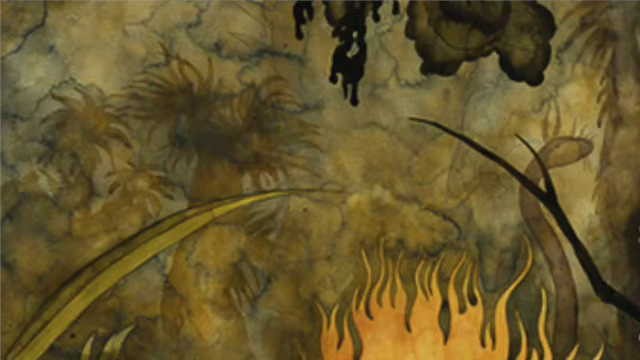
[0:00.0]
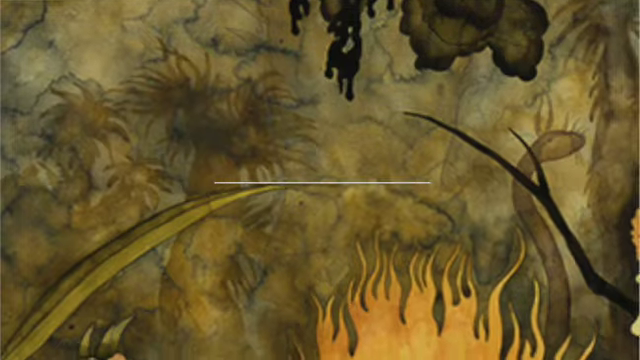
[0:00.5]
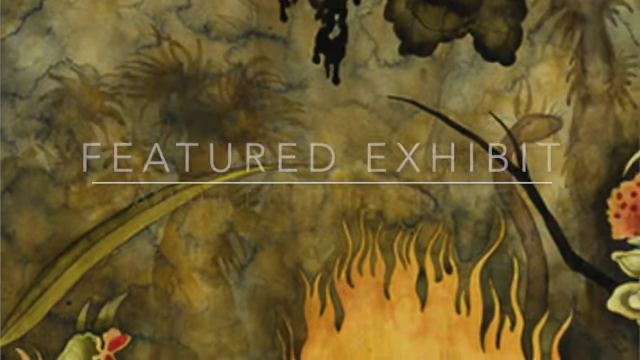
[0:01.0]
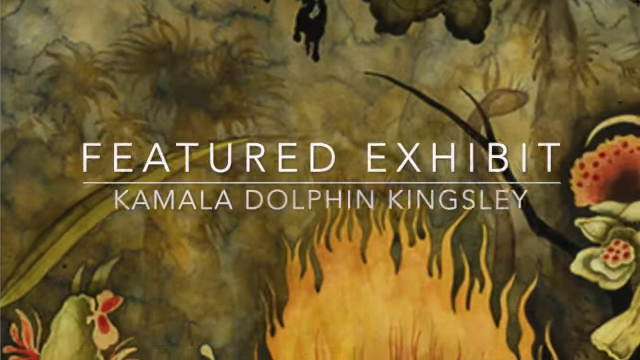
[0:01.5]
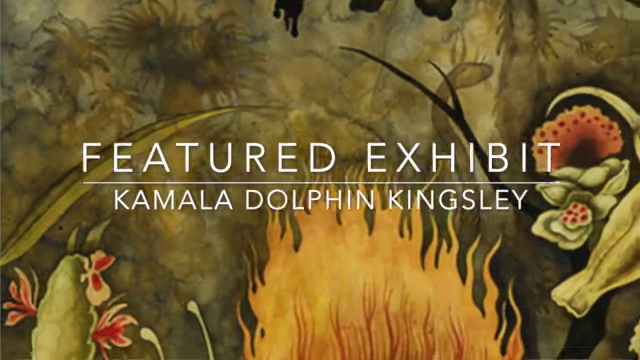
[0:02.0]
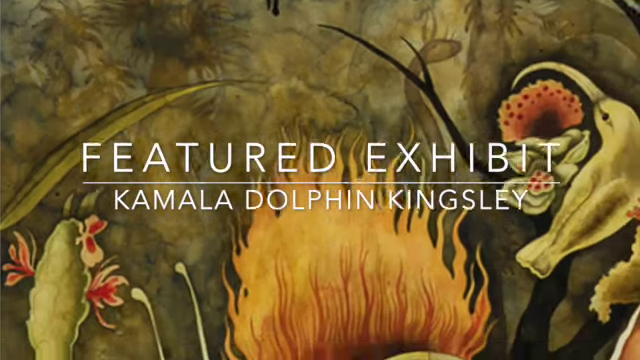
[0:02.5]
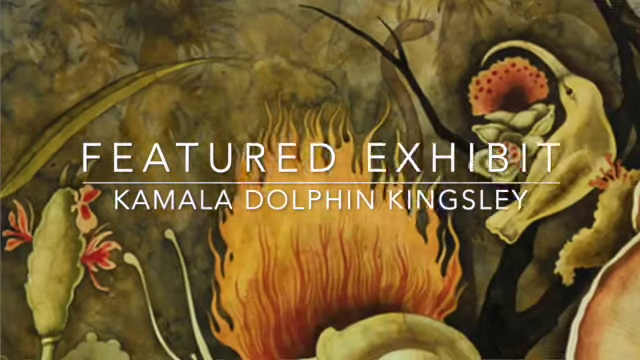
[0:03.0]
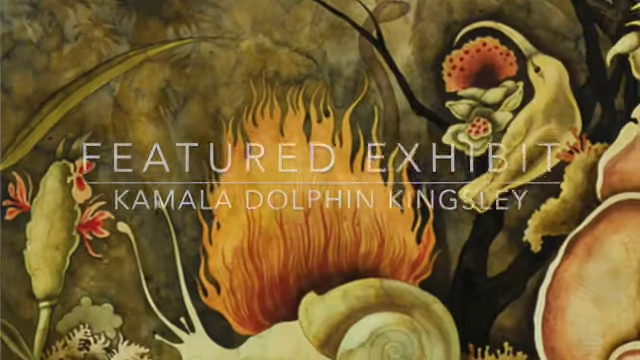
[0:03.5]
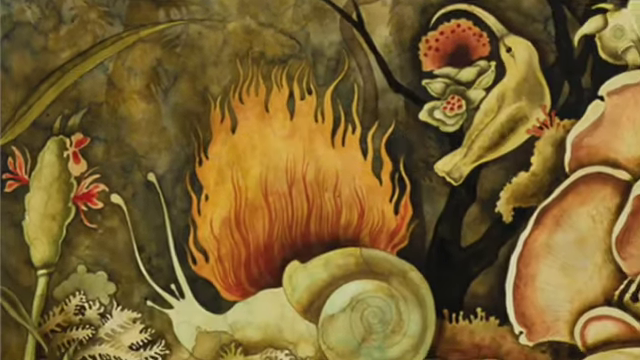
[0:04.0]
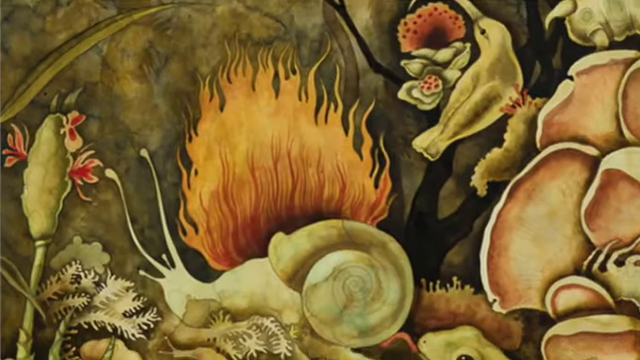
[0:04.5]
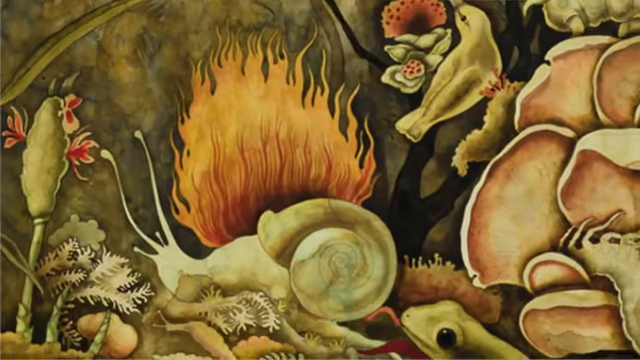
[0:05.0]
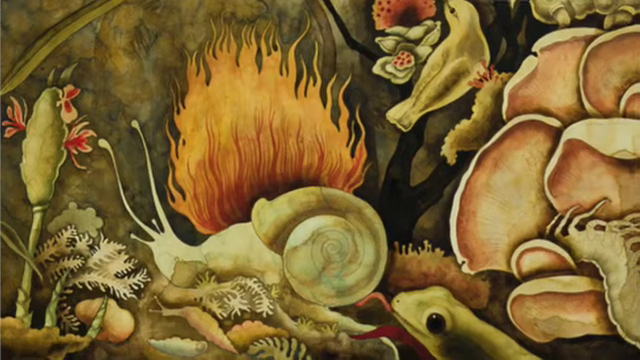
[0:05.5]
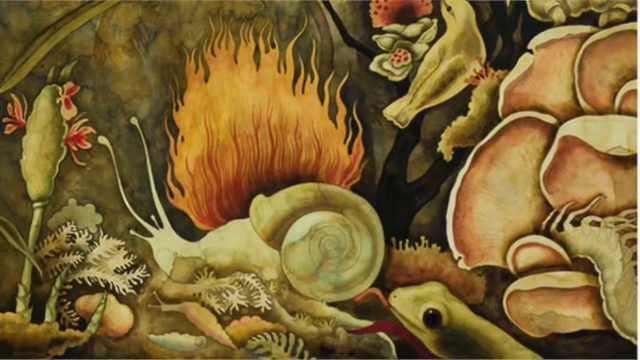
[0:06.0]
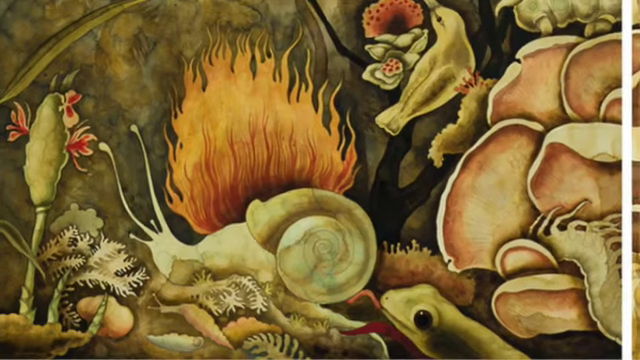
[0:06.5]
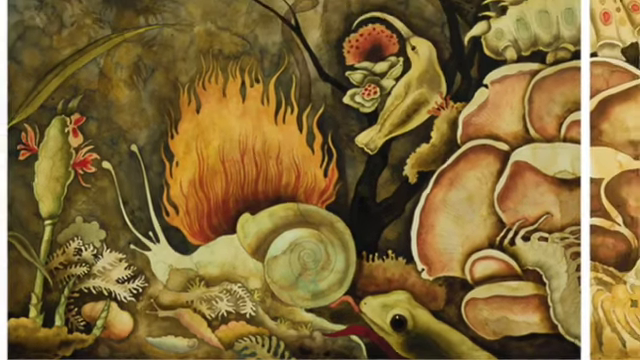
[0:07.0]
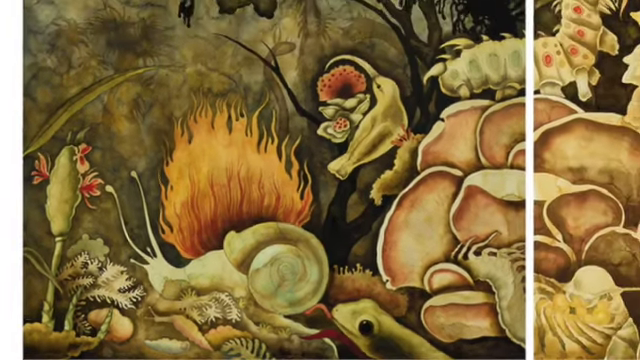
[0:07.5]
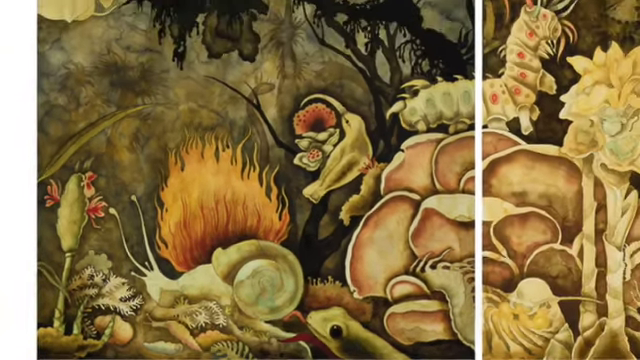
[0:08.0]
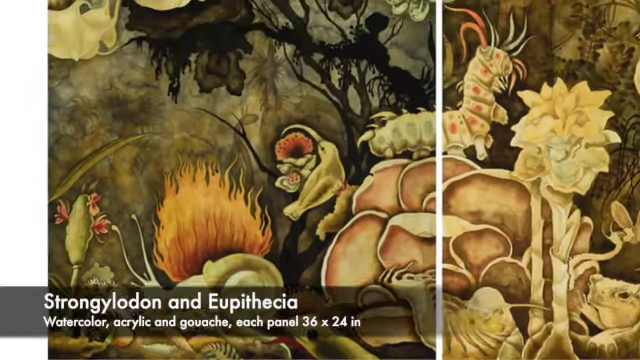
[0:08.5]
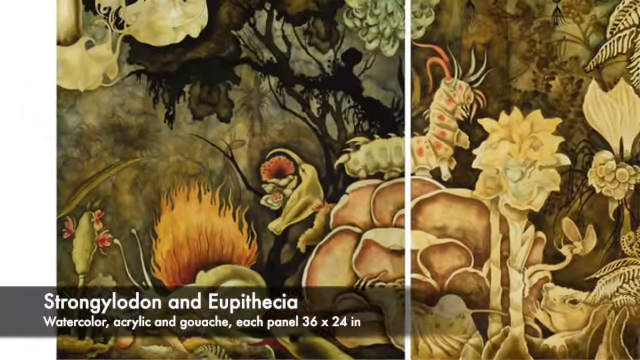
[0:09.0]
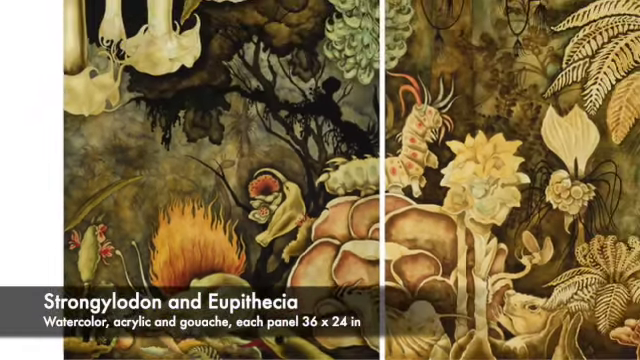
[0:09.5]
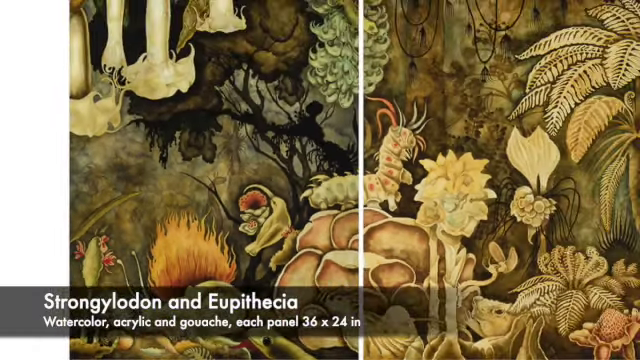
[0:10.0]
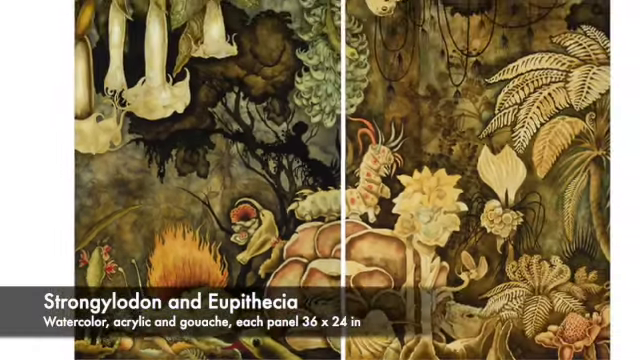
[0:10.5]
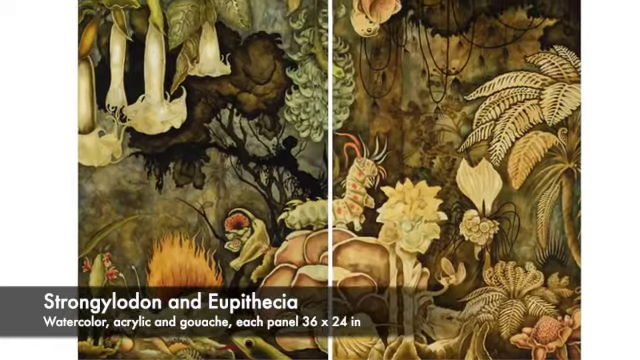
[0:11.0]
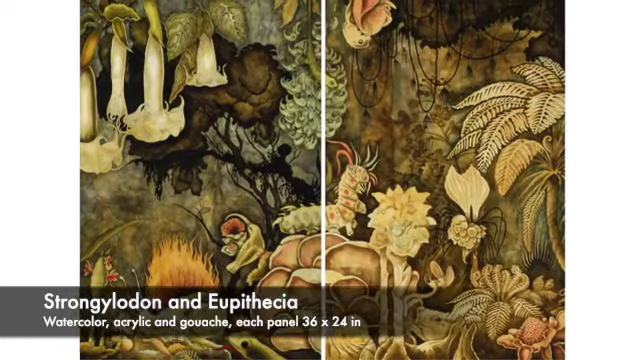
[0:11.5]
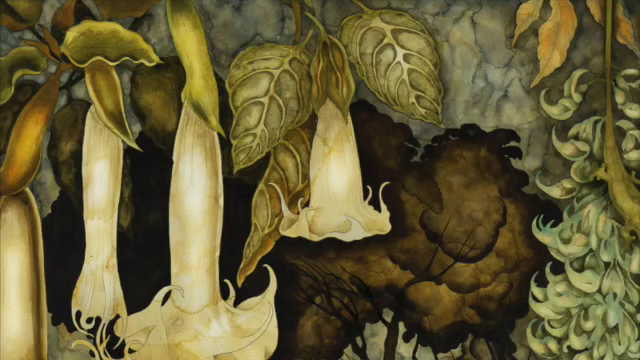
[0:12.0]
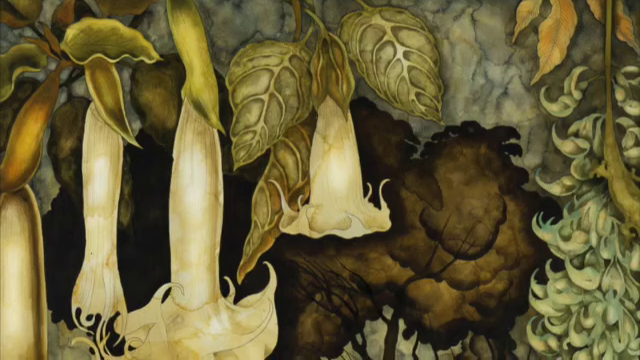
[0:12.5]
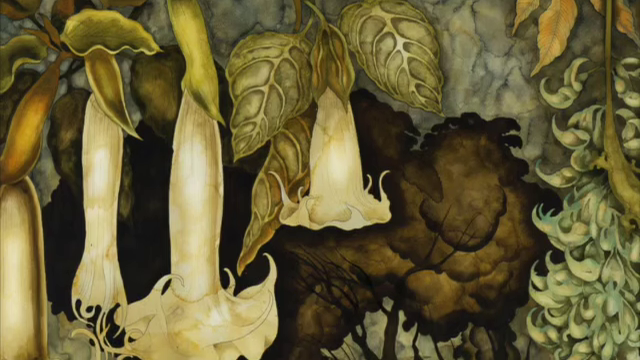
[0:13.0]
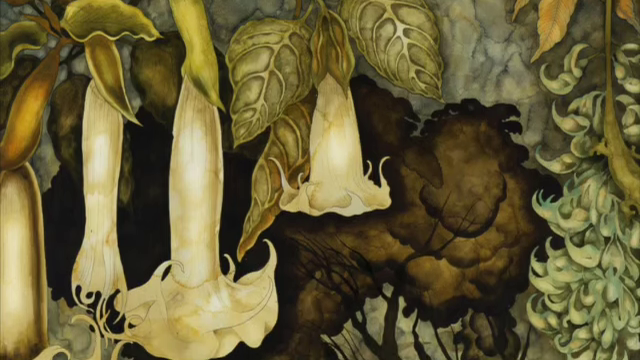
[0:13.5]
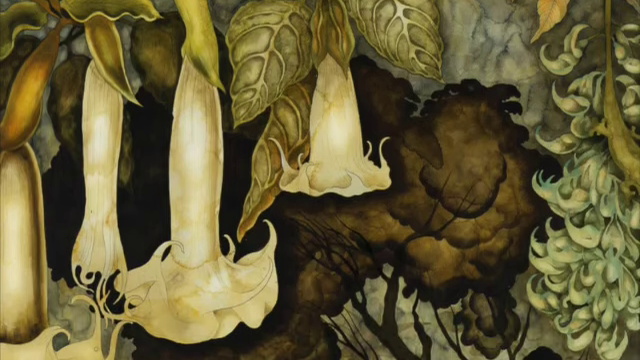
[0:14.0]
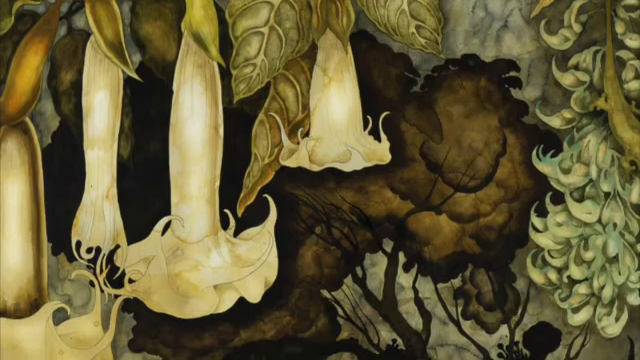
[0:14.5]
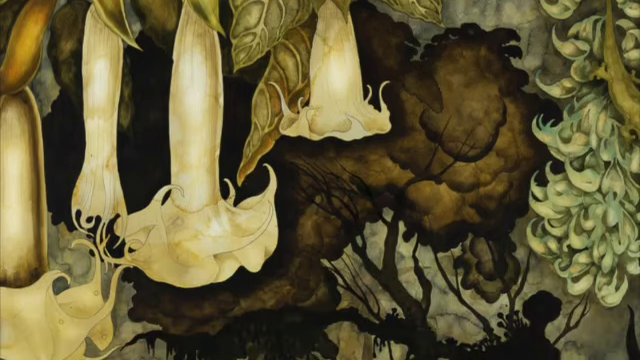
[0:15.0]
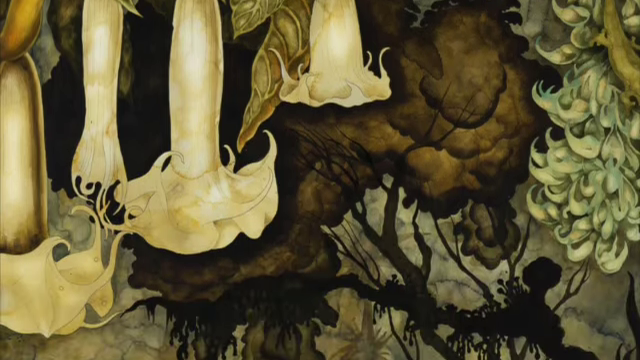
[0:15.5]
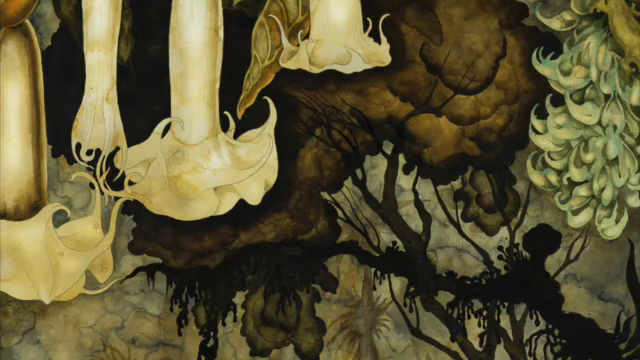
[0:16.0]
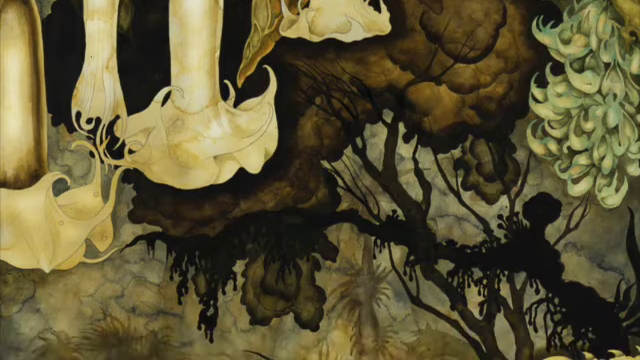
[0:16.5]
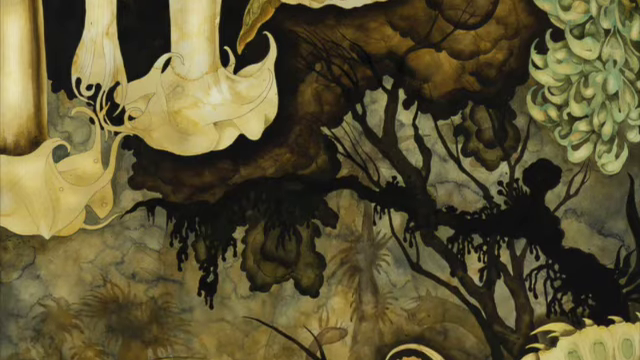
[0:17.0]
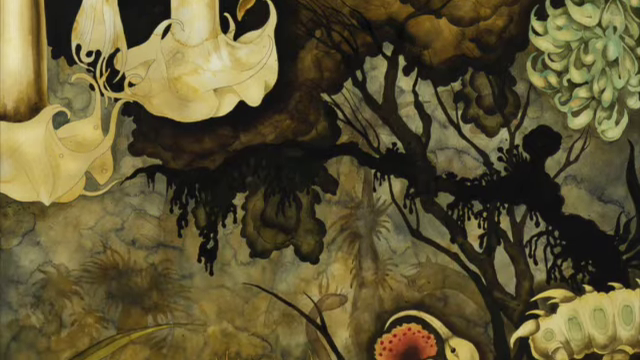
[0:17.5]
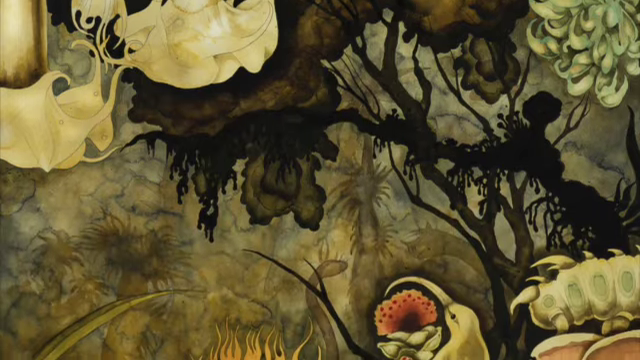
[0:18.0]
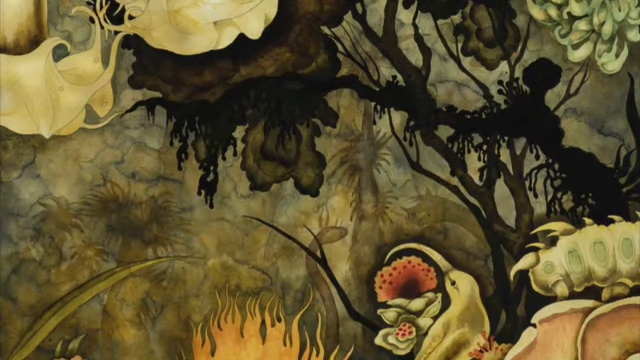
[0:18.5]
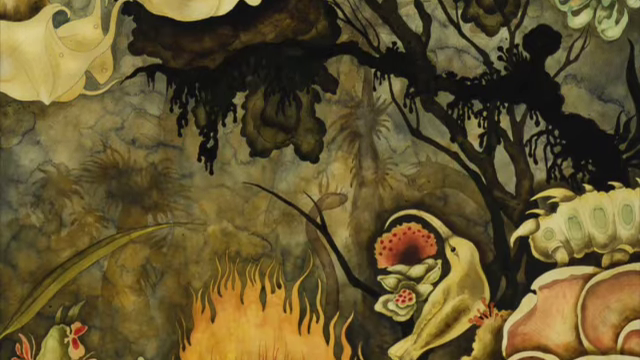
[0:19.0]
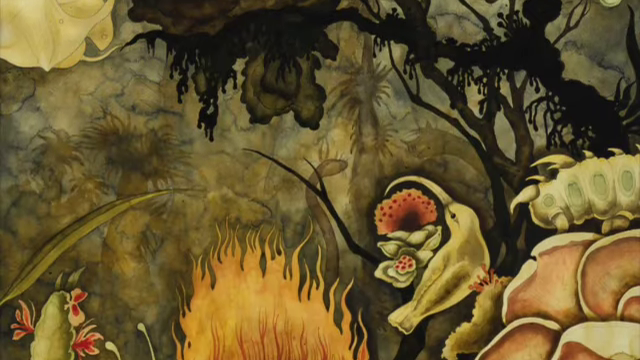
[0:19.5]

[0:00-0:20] The video opens on what looks like a mural of some kind showing several nature images: parts of plants and trees. The view pulls back and text reads "featured exhibit Kamala Delphin Kingsley." Pulling back further reveals more of the mural or painting: there are birds, a slug with a flaming bush behind him, and some other plants, flowers or mushrooms. A caterpillar appears to be sitting on top of what look like mushrooms. The view pans out to reveal more plants and some hanging flowers. The mural has a lot of musty green and yellow tones. The shot cuts to another angle focusing on the hanging white flowers, which look something like a tulip or a dandelion hanging upside down or facing downward. The camera pans down past a tree, a bird and a caterpillar. There are also some pink and orange tones in the picture, including some of the flowers and the flaming bush behind the slug. It looks like either a wall mural or an oil painting on canvas.